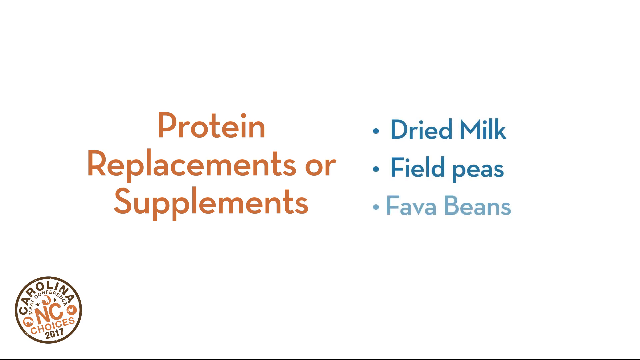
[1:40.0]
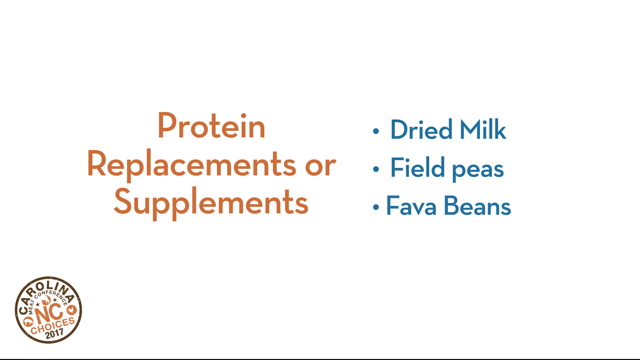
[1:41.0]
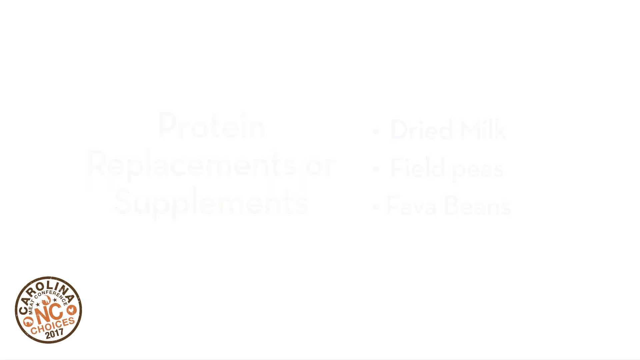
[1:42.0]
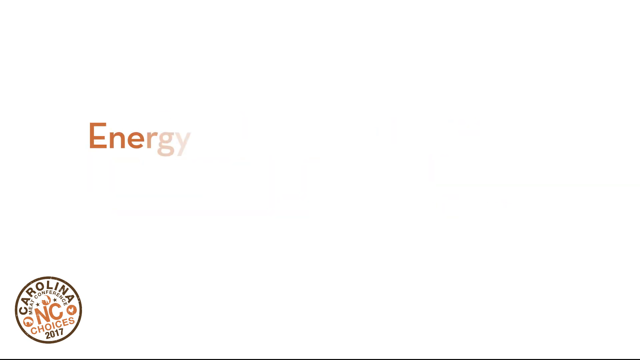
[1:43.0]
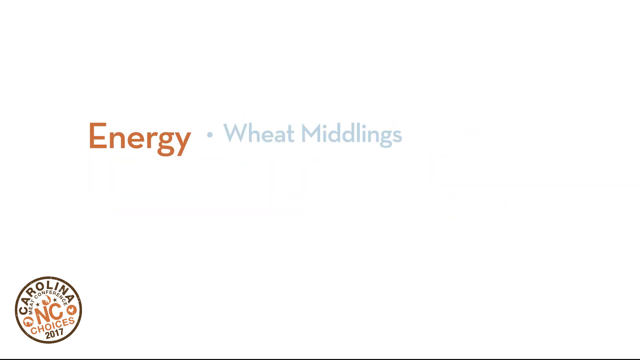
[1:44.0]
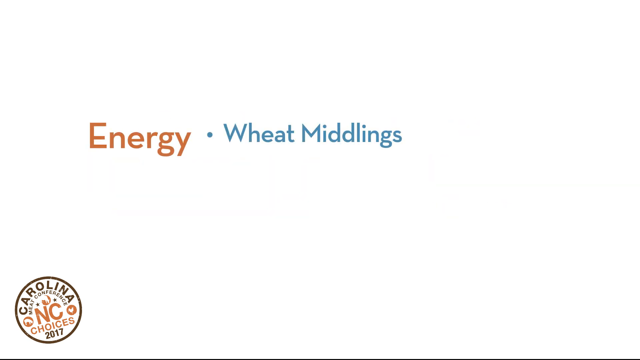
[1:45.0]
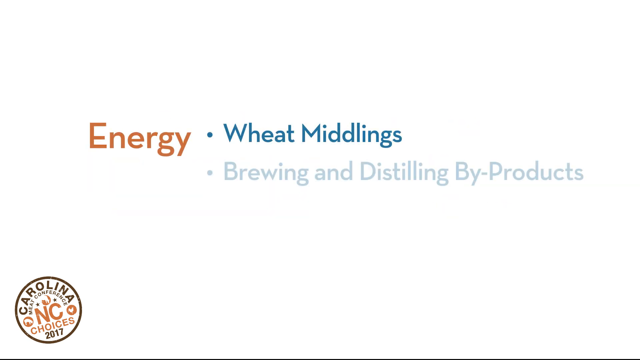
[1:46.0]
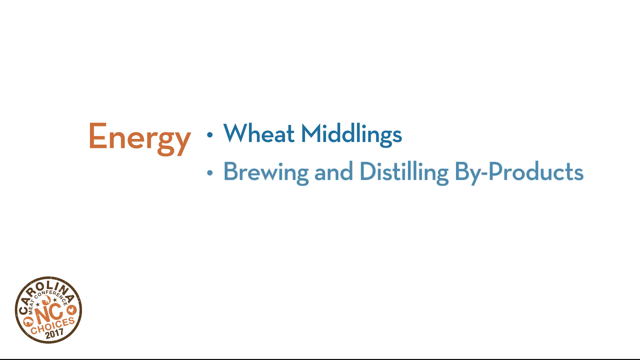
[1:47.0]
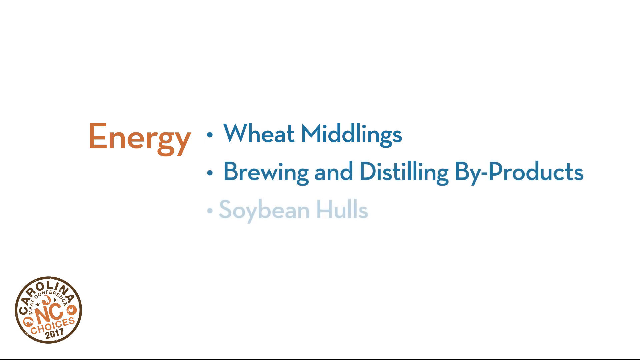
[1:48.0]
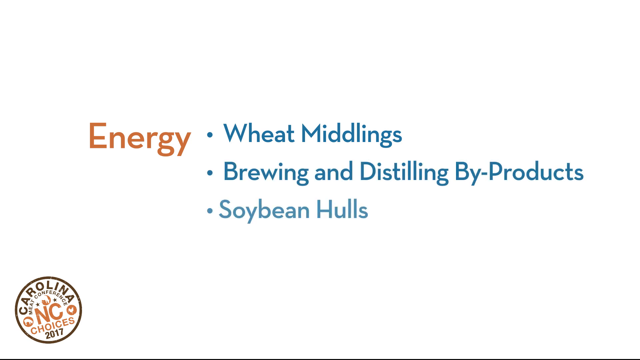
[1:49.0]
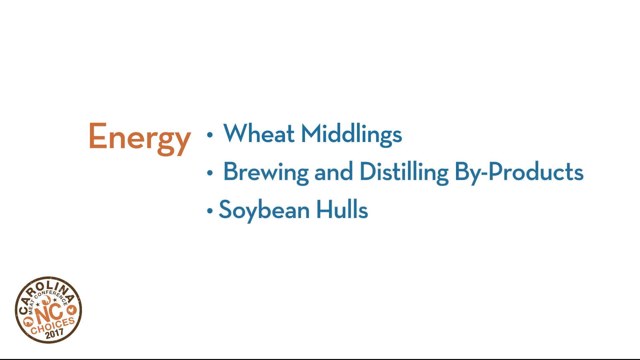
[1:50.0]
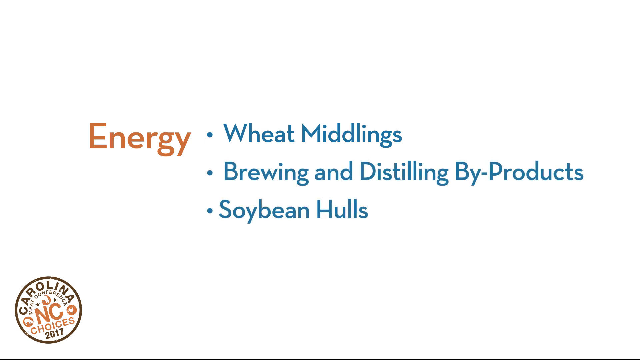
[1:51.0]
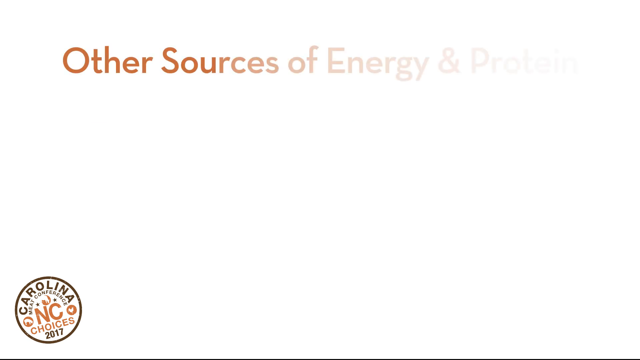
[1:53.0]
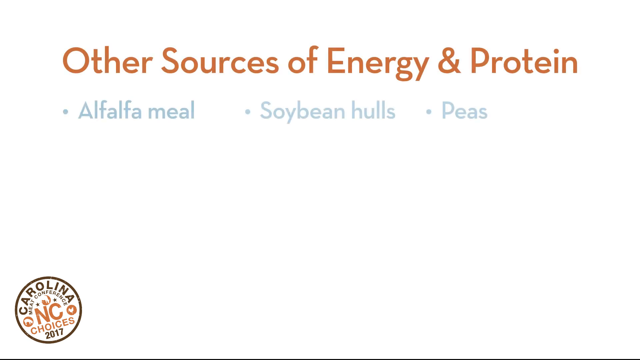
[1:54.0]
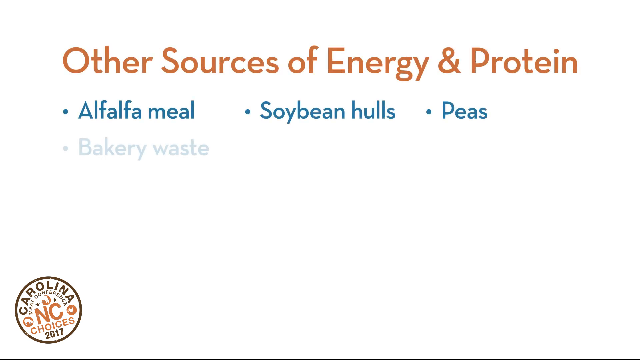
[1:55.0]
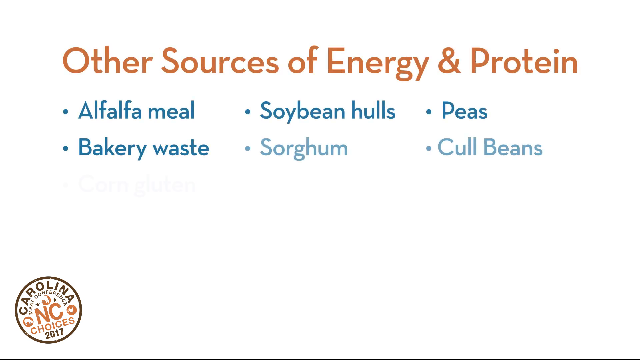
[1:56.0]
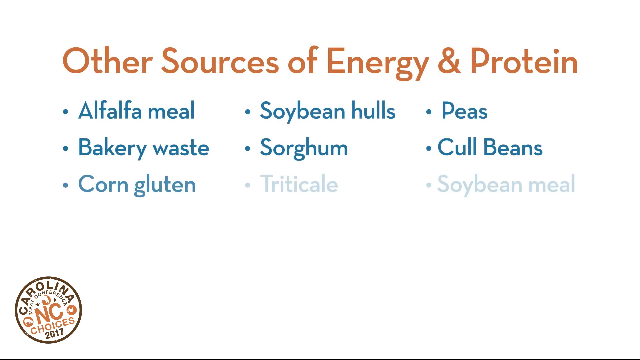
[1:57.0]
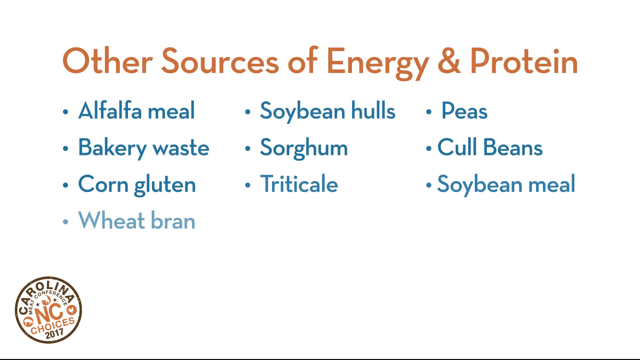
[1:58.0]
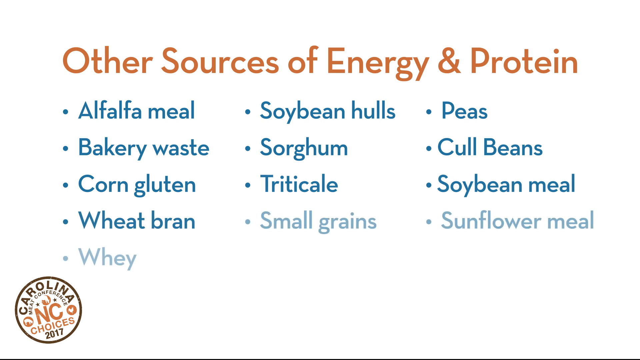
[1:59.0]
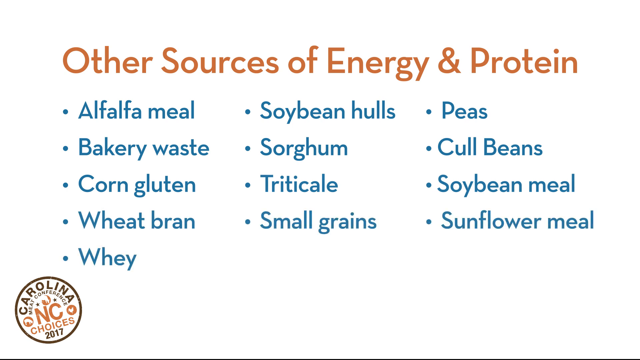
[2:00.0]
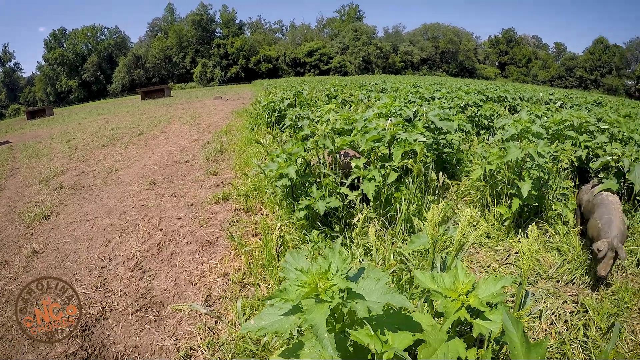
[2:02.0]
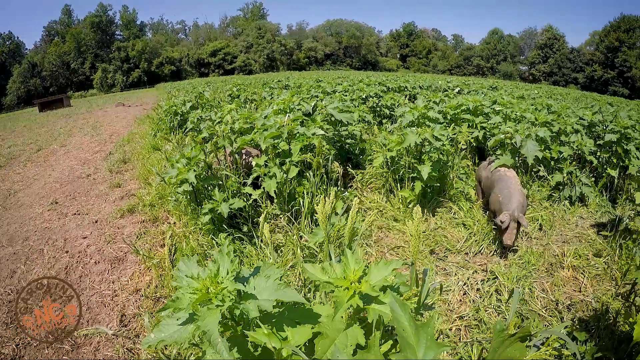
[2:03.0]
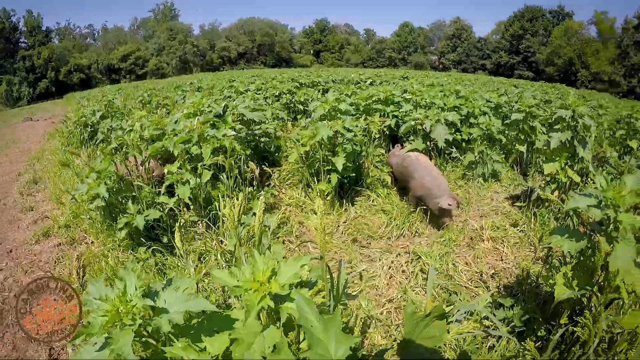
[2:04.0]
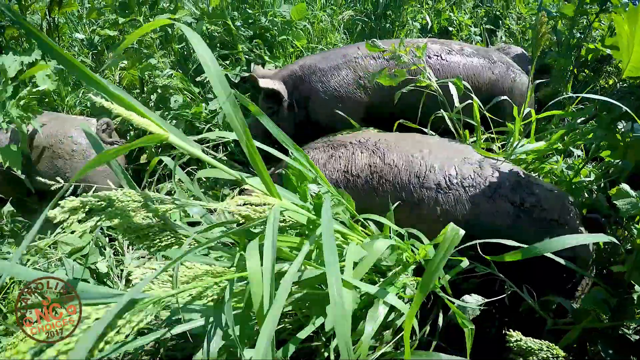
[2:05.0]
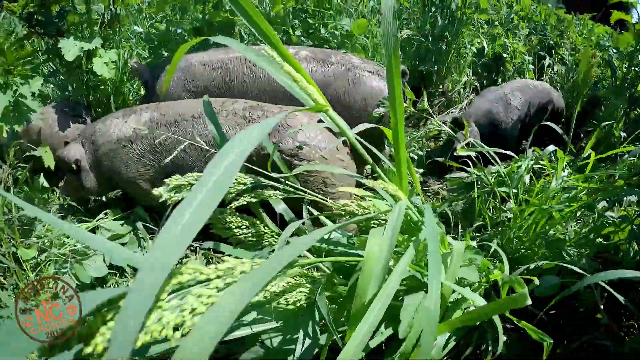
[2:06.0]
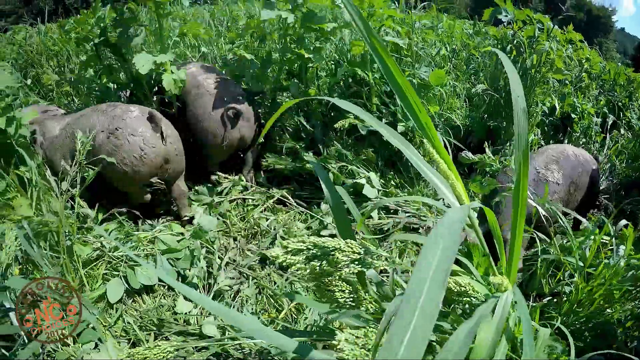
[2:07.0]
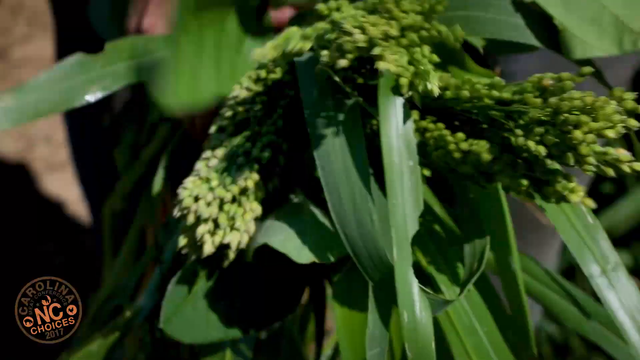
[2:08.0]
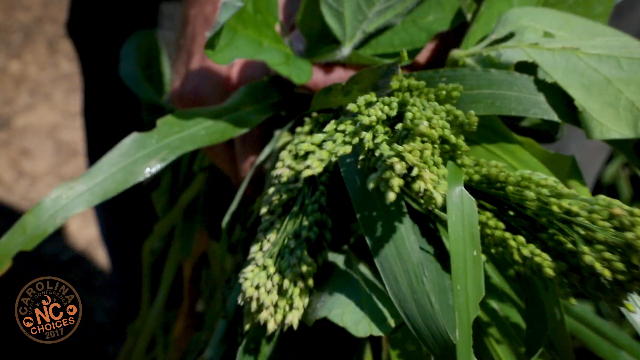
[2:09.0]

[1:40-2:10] A headline in orange reads "protein replacements or supplements," and below it a bulleted vertical list in blue lettering reads "dried milk," "field beans," "fava beans." Next comes "energy" in orange, which brings up a vertical bulleted list in blue: "wheat middlings," "brewing and distilling byproducts," and "soybean hulls." Then another orange header reads "other sources of energy and protein," with three bulleted columns listing "alfalfa meal, bakery waste, corn gluten, wheat bran, whey, soybean hulls, sorghum, triticate, small grains, beans, coal beans, soybean meal, and sunflower meal." Then a live shot pans over a field. There is one pig, apparently a sow, in a field of something growing, possibly weeds, and she is trampling it down as she crosses.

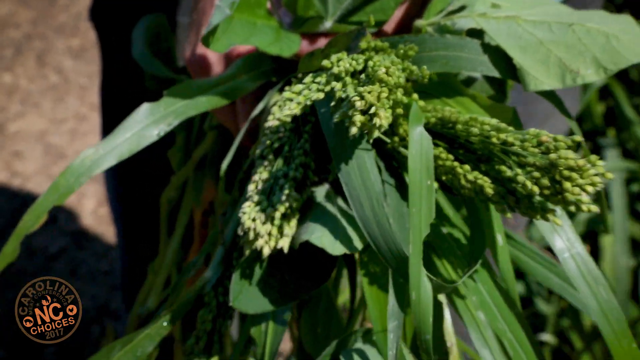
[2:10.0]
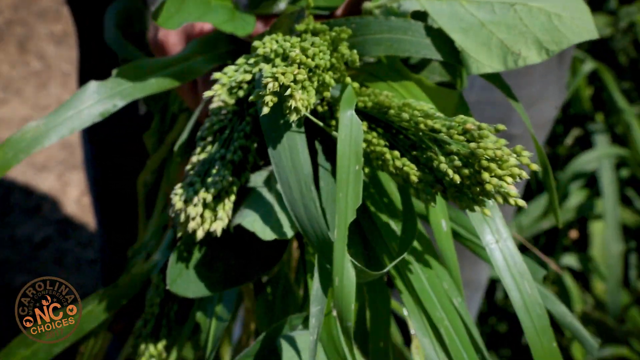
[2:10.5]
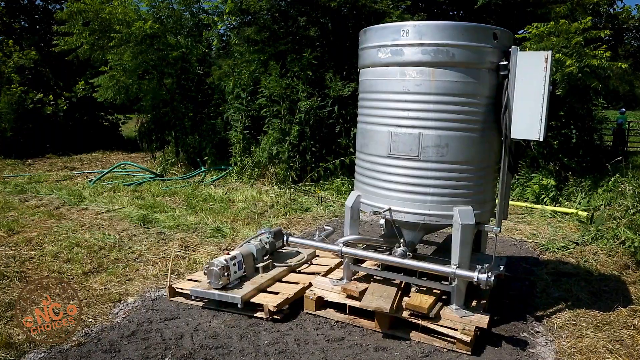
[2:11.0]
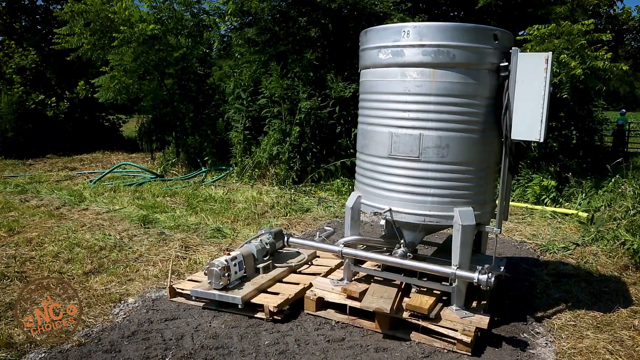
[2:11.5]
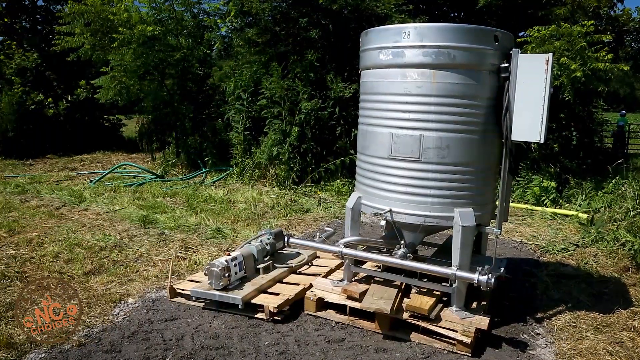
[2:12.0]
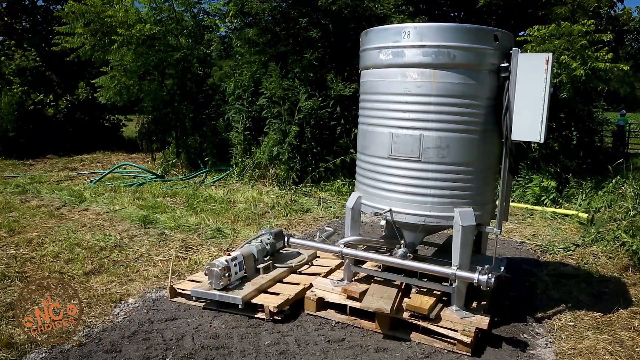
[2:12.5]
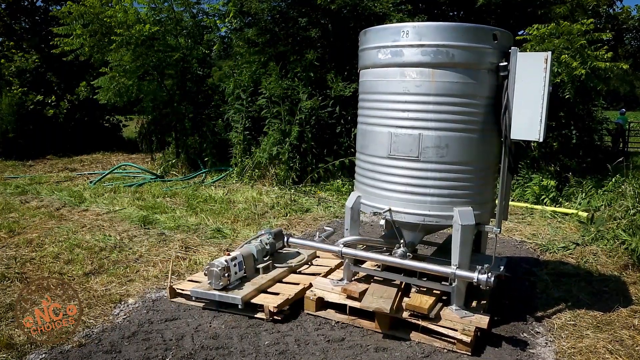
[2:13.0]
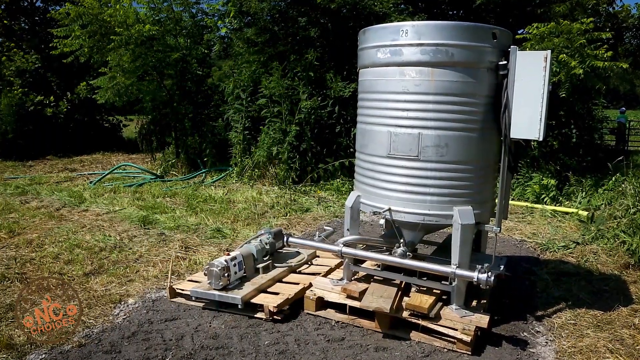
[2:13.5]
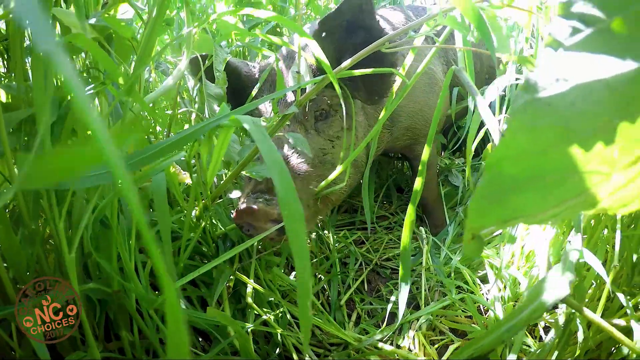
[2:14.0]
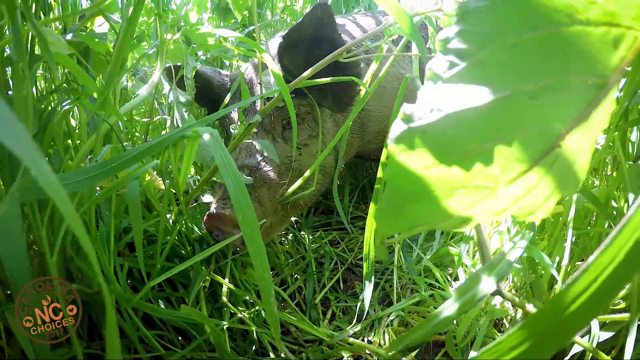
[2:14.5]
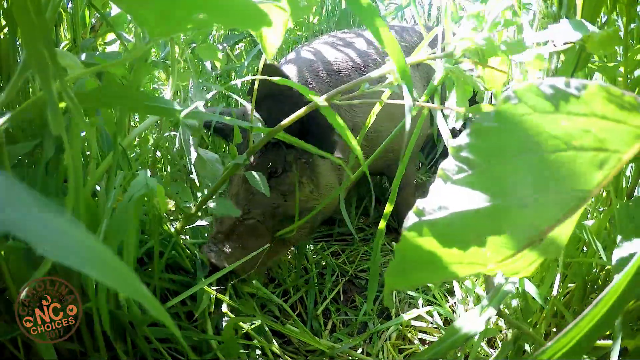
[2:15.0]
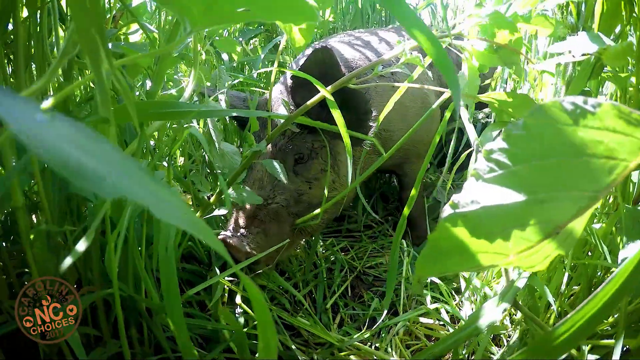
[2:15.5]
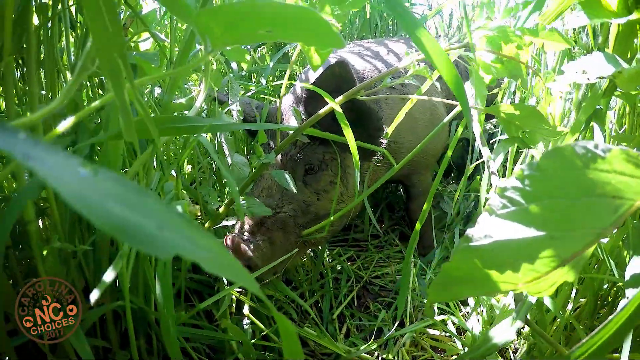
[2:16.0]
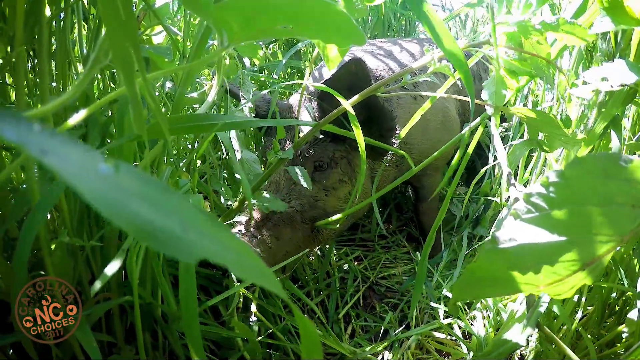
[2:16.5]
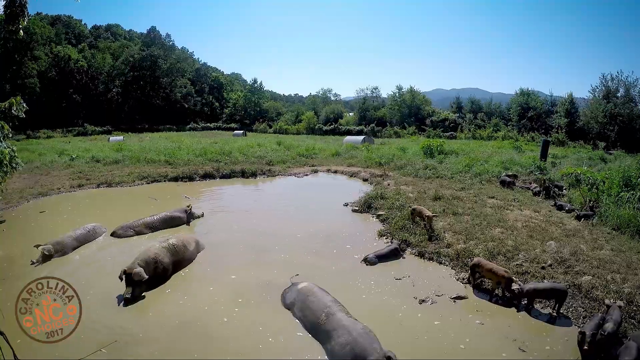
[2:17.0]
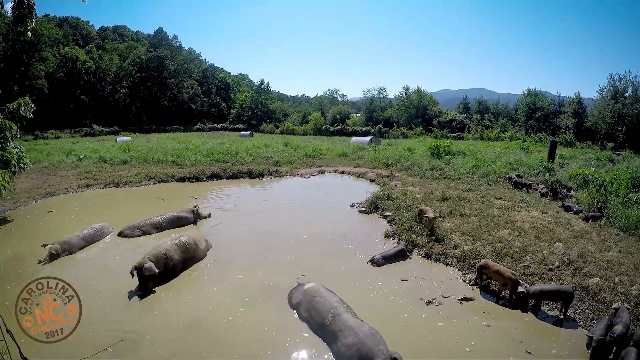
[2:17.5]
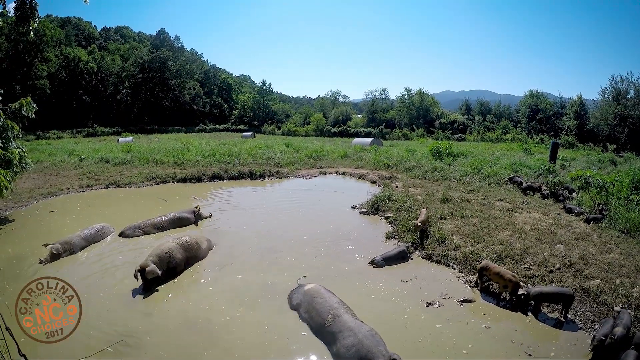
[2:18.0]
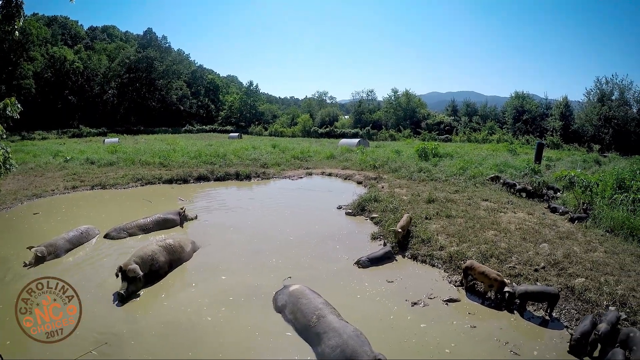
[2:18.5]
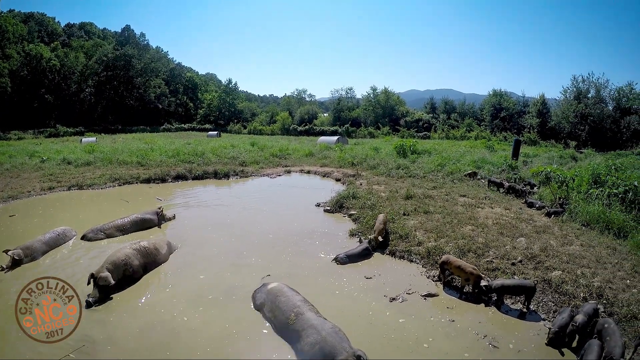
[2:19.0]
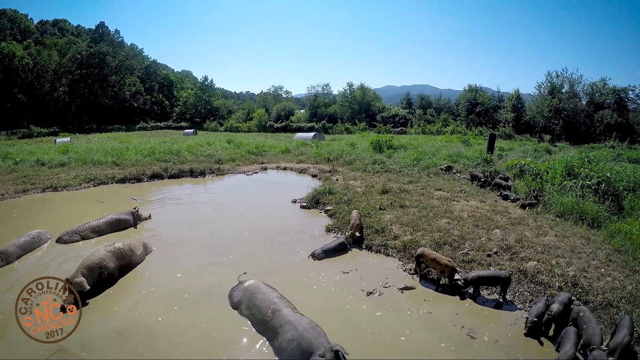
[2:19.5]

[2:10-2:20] A person holds a bunch of greenery with some heads of seeds that seem not to be mature, possibly some sort of wheat or sorghum, kind of like wheat that is not ready to be harvested but has possibly been pollinated. The person's hands appear white. It then kind of goes forward to a big steel vat with some sort of box on the side for control. A pipe comes out of it, and it is put on a wooden platform; it is possibly for heating something up and getting out some sort of spirit. There is a wadded-up hose in the background, along with some trees and brush.